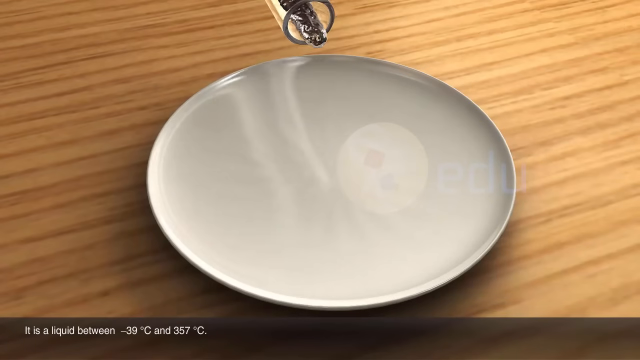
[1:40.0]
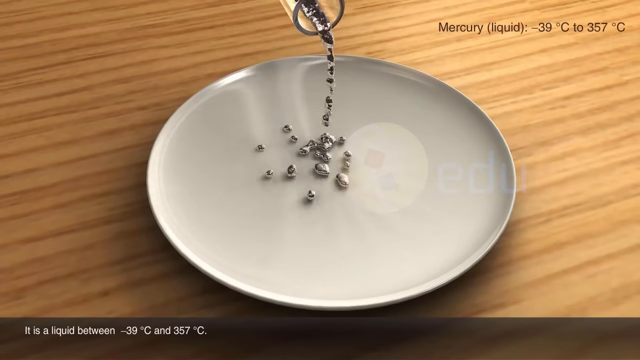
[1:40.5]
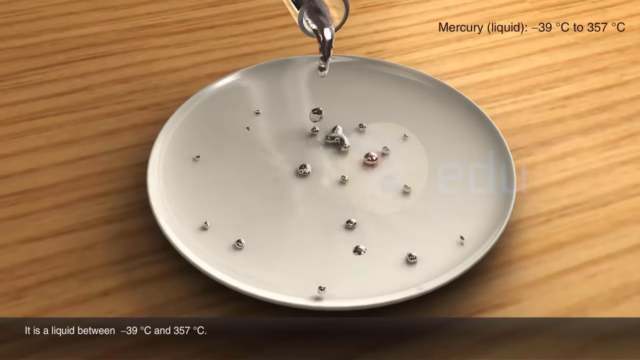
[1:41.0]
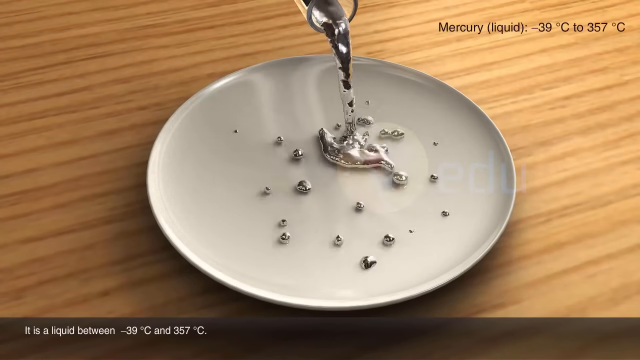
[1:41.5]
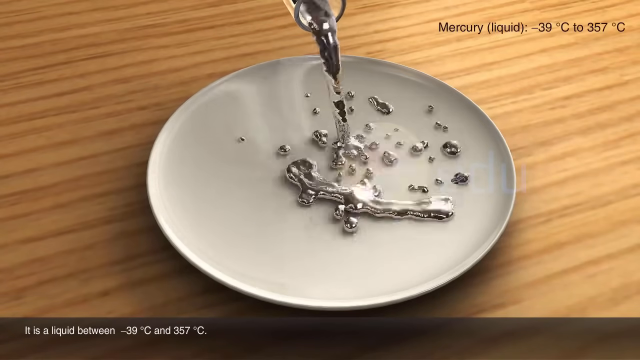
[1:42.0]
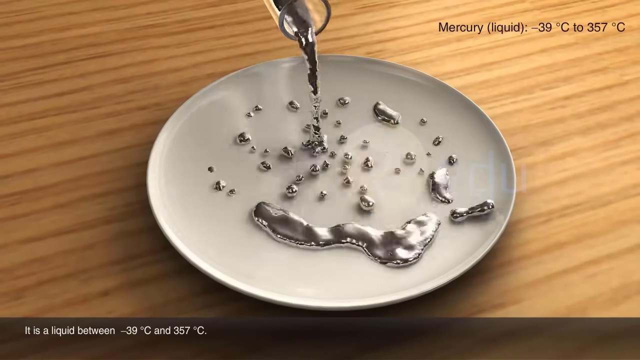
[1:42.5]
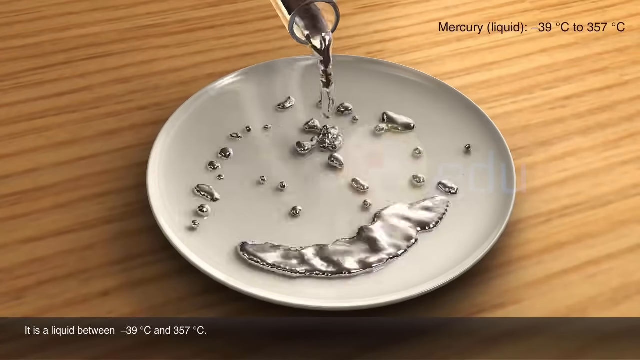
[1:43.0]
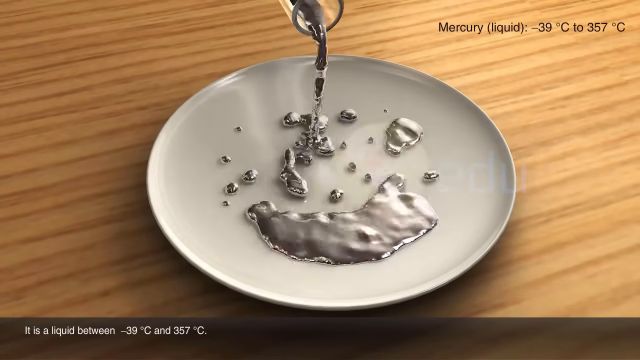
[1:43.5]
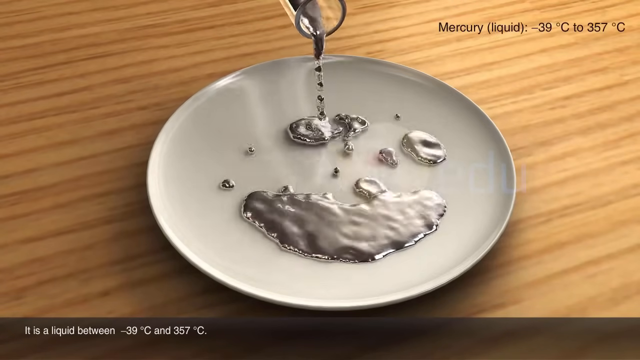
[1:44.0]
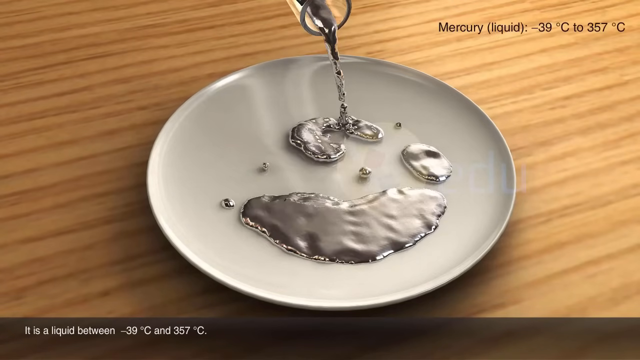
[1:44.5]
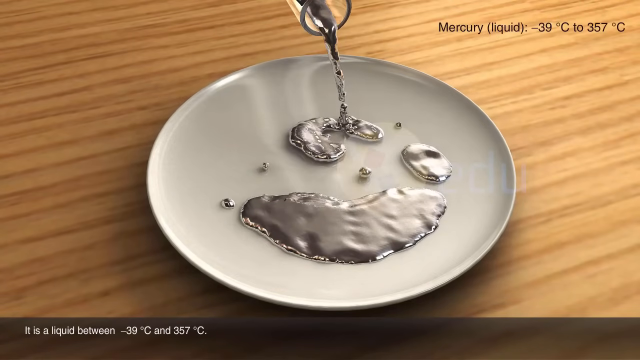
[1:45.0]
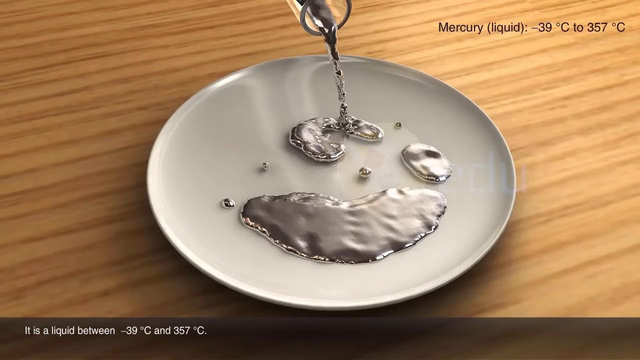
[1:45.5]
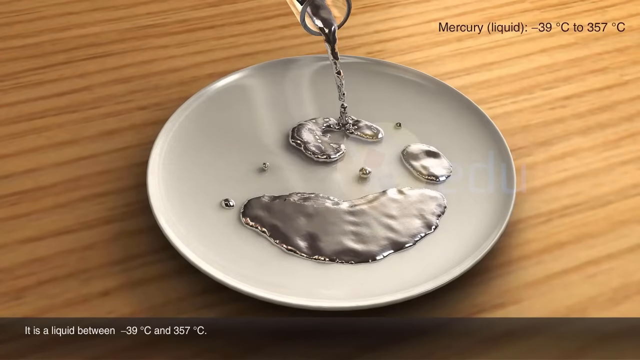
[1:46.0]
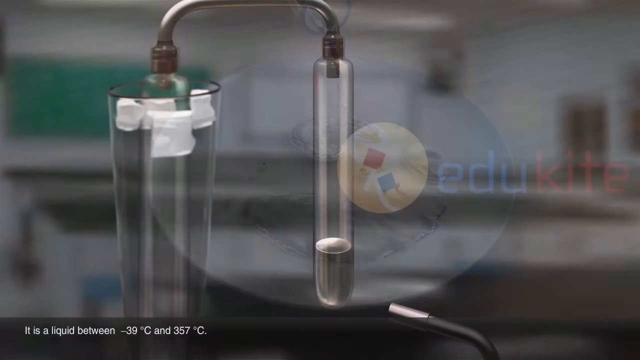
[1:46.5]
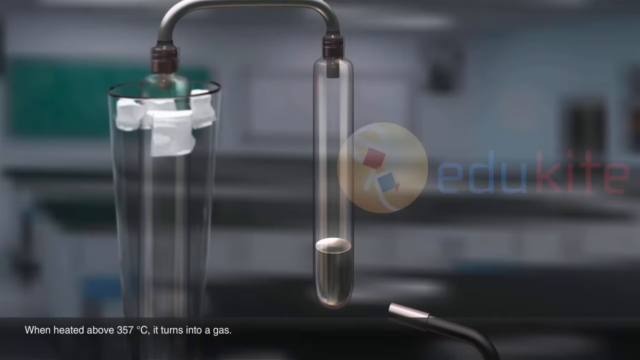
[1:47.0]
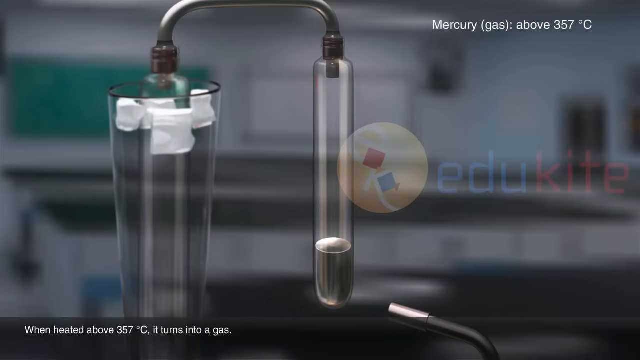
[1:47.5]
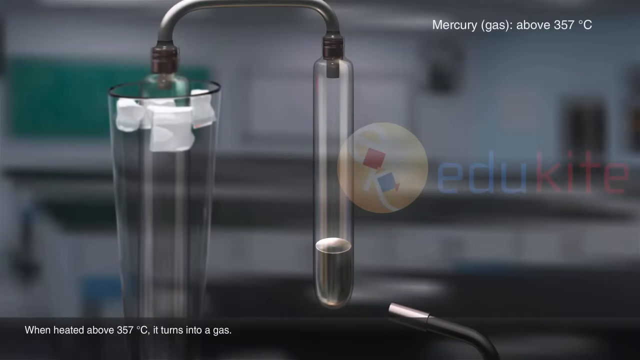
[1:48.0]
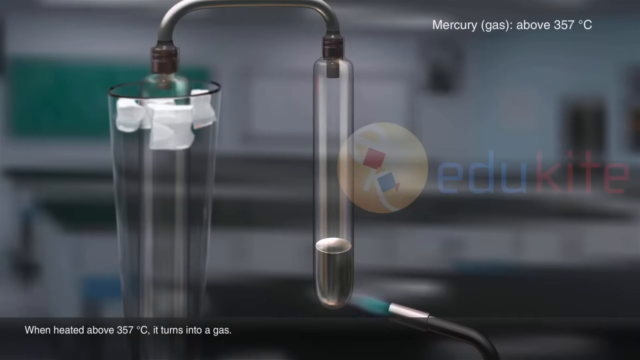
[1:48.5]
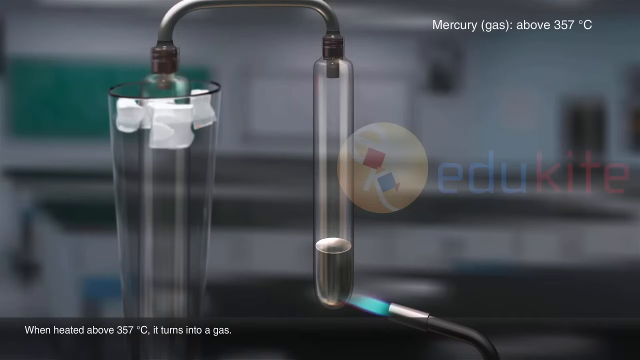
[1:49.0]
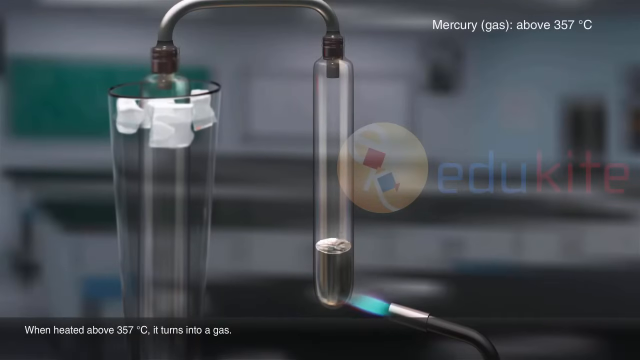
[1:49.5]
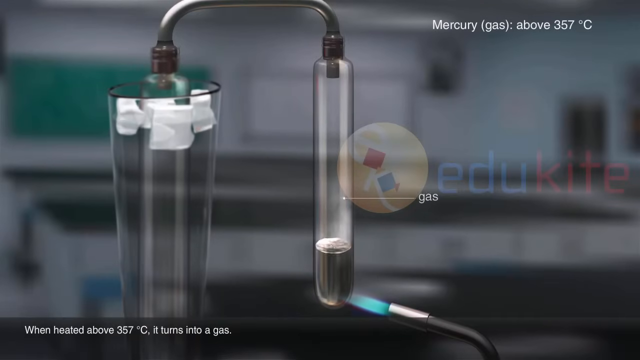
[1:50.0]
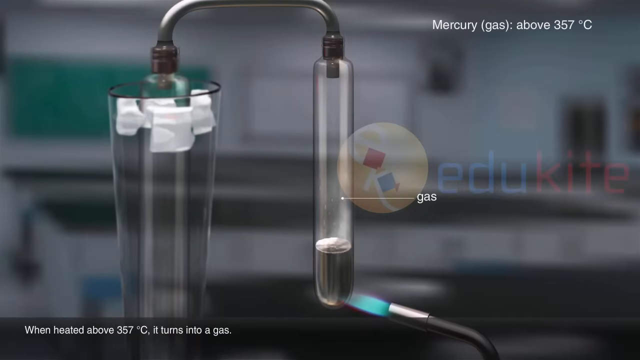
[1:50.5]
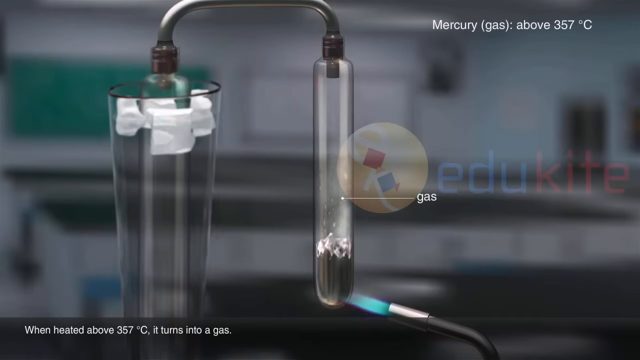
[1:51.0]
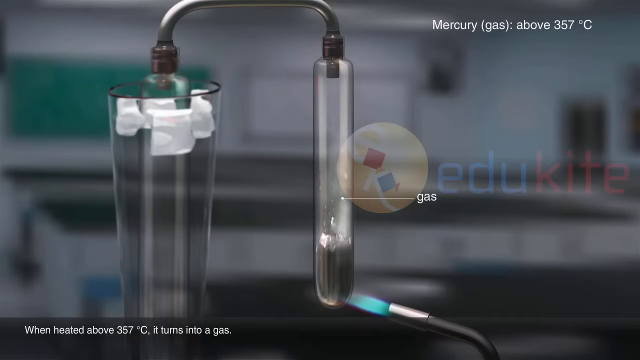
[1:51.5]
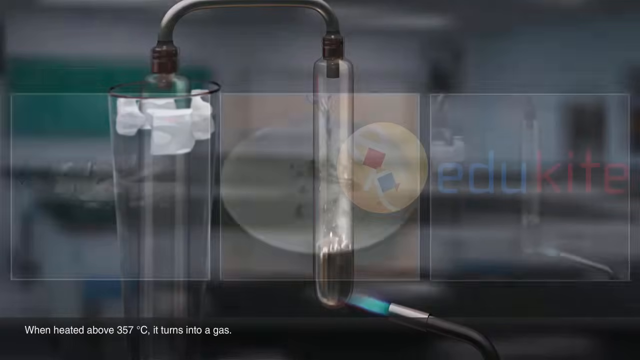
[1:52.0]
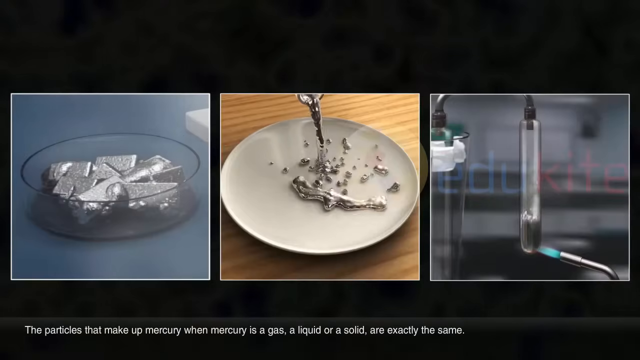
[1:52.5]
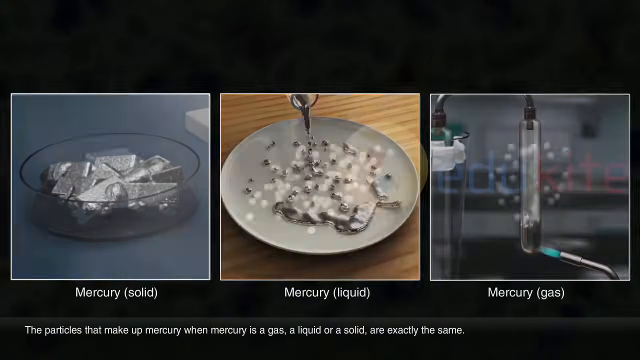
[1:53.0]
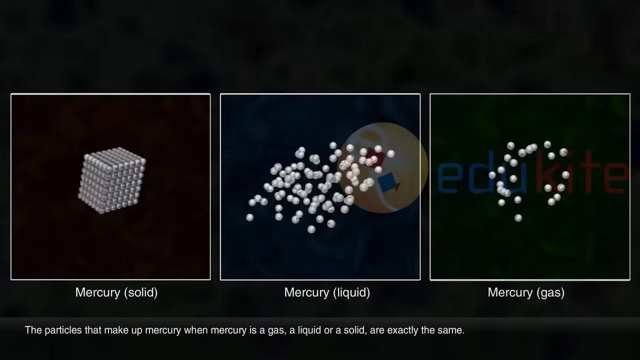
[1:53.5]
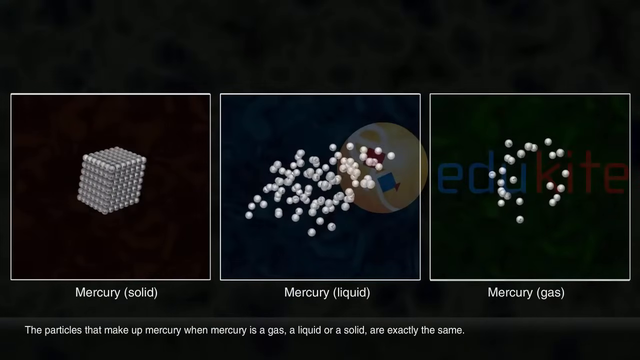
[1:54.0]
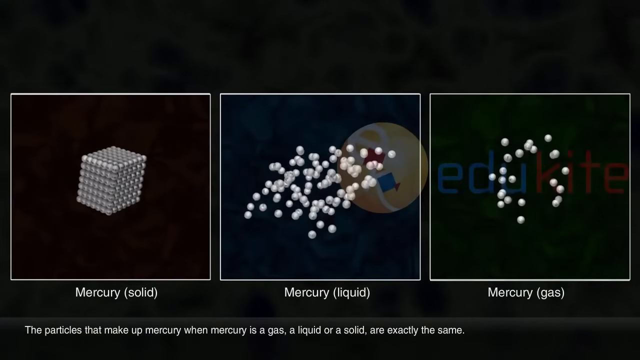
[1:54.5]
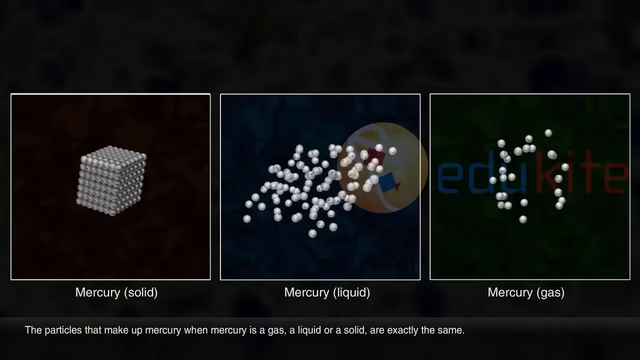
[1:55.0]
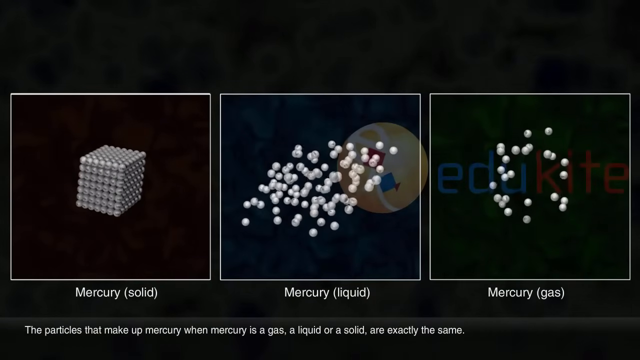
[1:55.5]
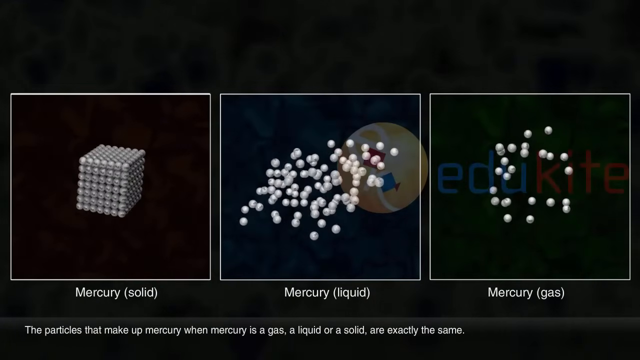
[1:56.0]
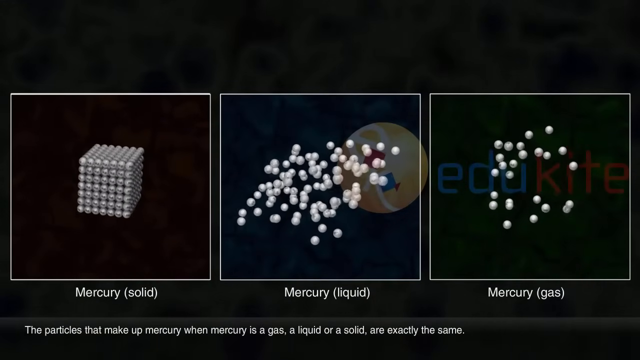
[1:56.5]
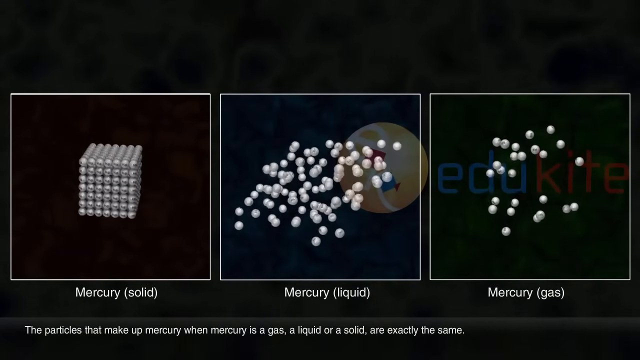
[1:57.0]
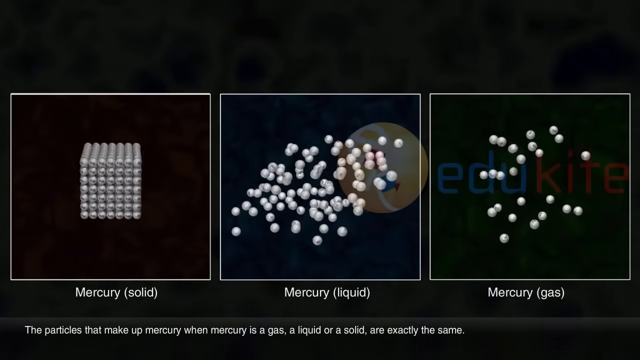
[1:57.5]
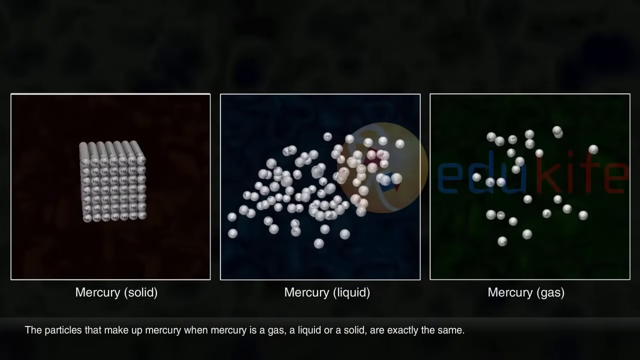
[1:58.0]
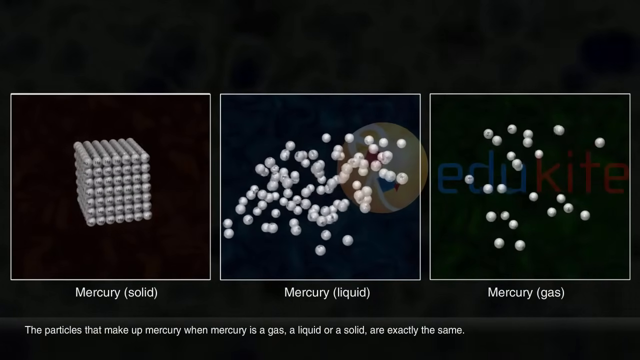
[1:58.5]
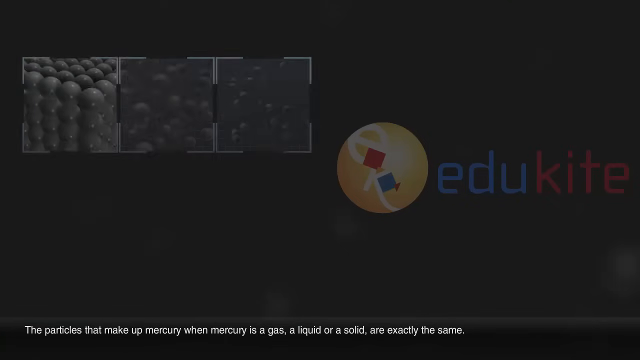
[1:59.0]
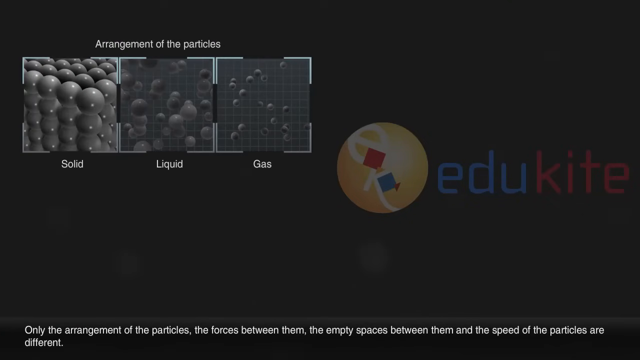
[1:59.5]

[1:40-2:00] A white plate is in the middle, on top of a wooden table, and what looks like a test tube at the top is pouring a silver liquid into the plate. White text at the bottom reads "it is a liquid between minus 39 degrees Celsius and 357 degrees Celsius." As the liquid pours into the plate it spreads out into many droplets and then comes back together. The video transitions to a scene that appears to show a glass tube in the middle connected to a tube at the top and another tube on the left side; what looks like a fire is turned on at the bottom right. A line points to the gas coming out of the liquid, labeled "gas" in white. At the bottom the text reads "when heated above 357 degrees Celsius it turns into a gas," and white text at the top right reads "mercury gas above 357 degrees Celsius." The video then transitions to what looks like a black background with three pictures in squares from left to right, each with white text below. On the left, what looks like many silver blocks in a petri dish, labeled "mercury solid"; in the middle, the white dish with the silver liquid making beads and gathering together, labeled "mercury liquid"; and on the right, what looks like the test tube with liquid inside being burned at the bottom right with a burner, labeled "mercury gas." White text at the bottom reads "the particles that make up mercury when mercury is a gas a liquid or a solid are exactly the same." The pictures then change to show spheres: for mercury solid, a lattice, a cube of tightly packed spheres; for mercury liquid, spheres that appear dispersed a little; and for mercury gas, very dispersed white spheres. The video then transitions to a scene with what look like the three squares at the top left, white text above them reading "arrangement of the particles," and labels "solid," "liquid" and "gas": the solid tightly packed in a lattice, the liquid a bit dispersed and the gas very dispersed. The text at the bottom reads "only the arrangement of the particles, the forces between them, the empty spaces between them, and the speed of the particles are different."